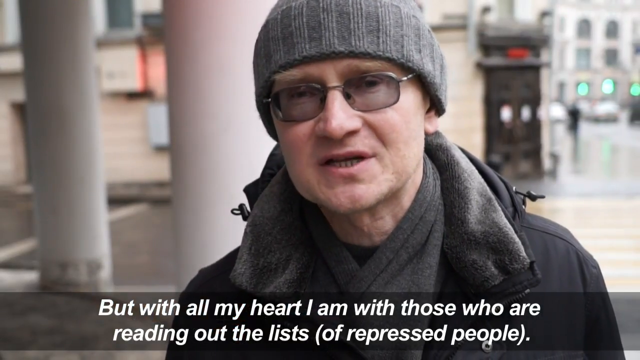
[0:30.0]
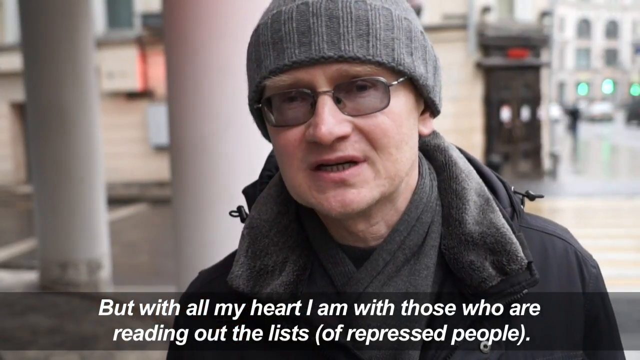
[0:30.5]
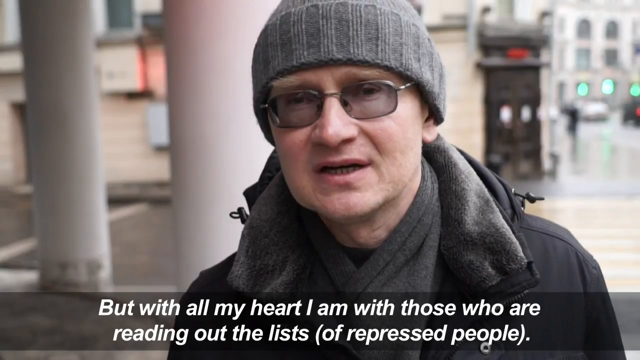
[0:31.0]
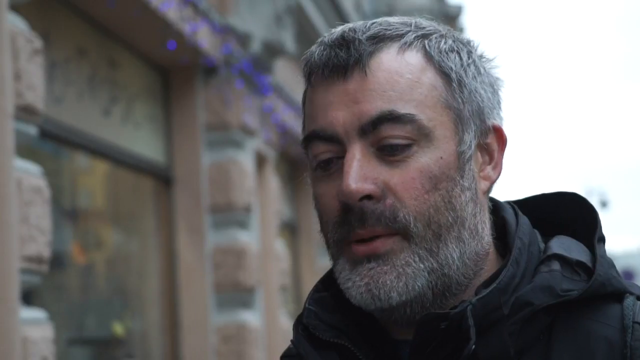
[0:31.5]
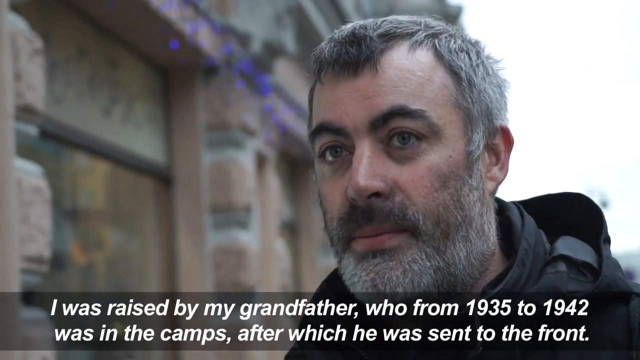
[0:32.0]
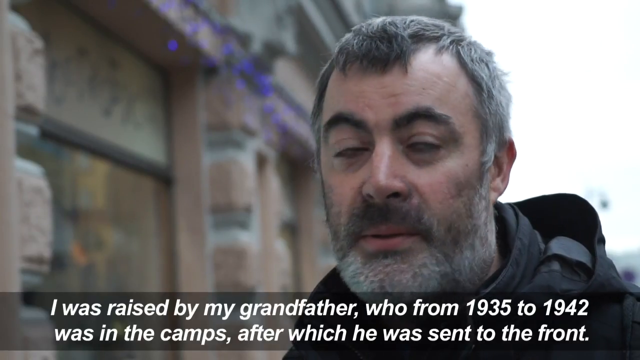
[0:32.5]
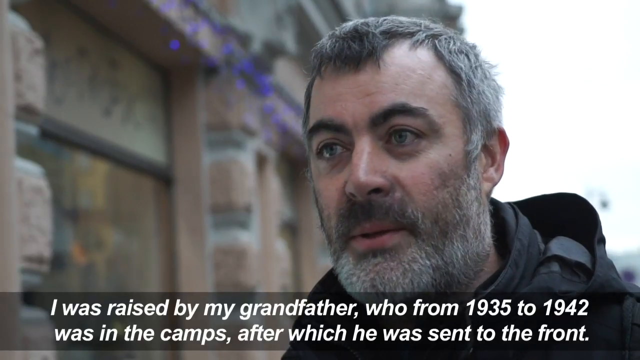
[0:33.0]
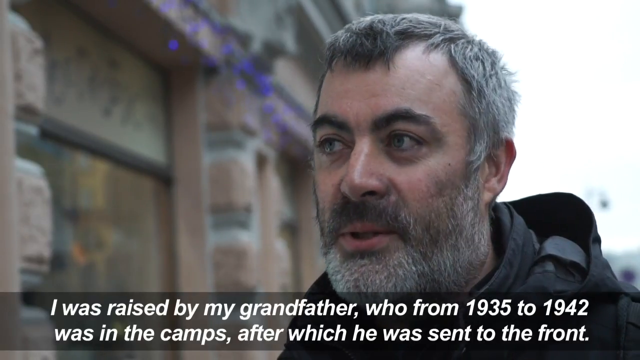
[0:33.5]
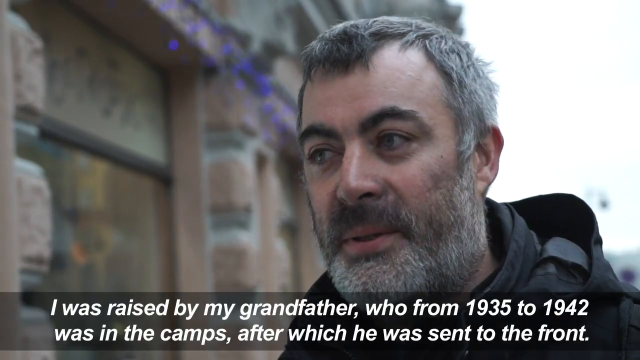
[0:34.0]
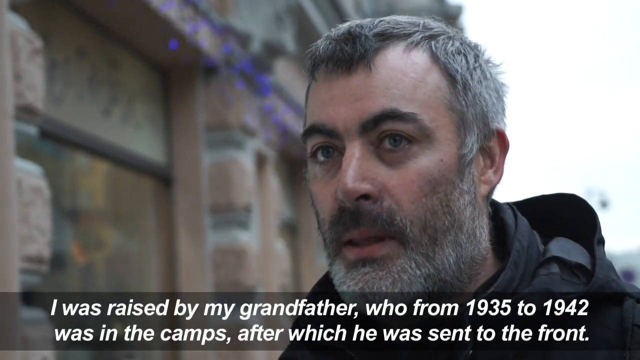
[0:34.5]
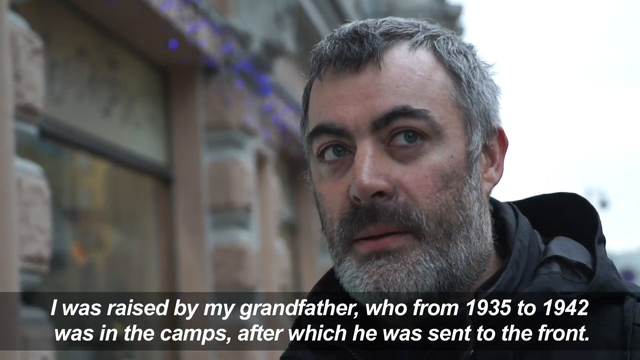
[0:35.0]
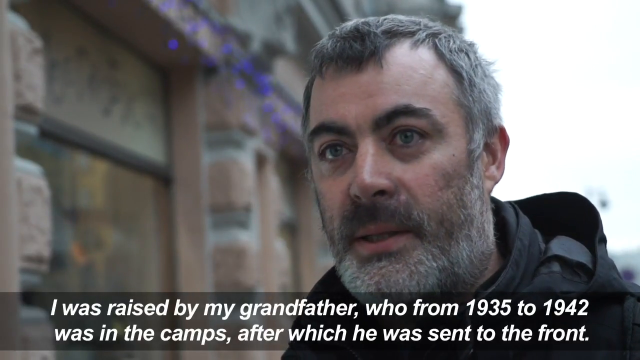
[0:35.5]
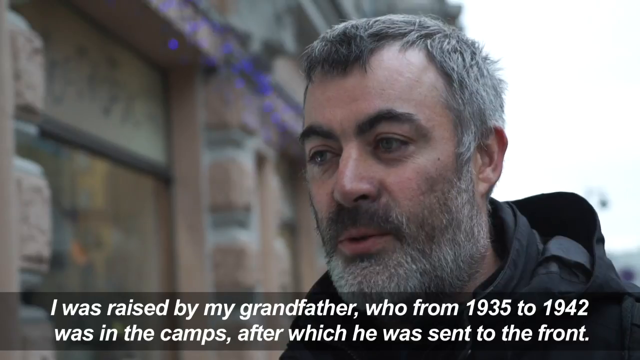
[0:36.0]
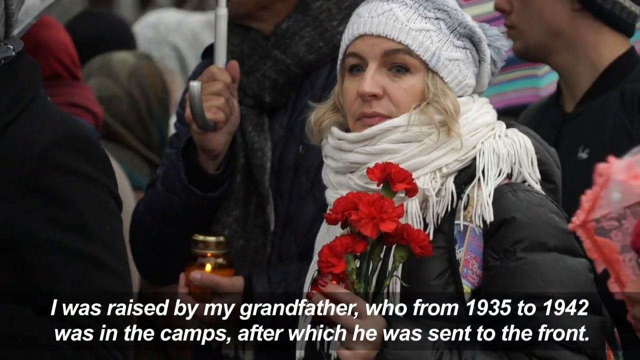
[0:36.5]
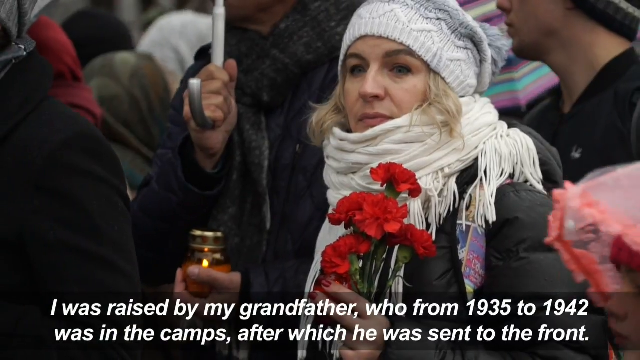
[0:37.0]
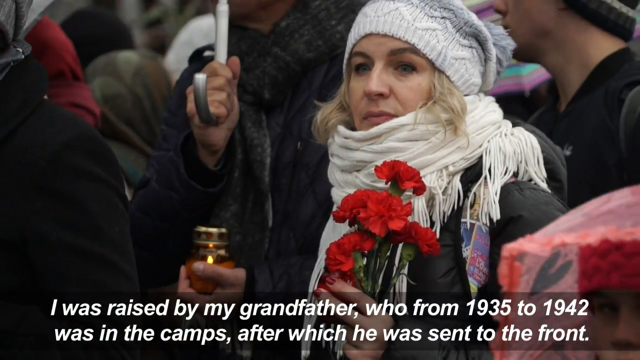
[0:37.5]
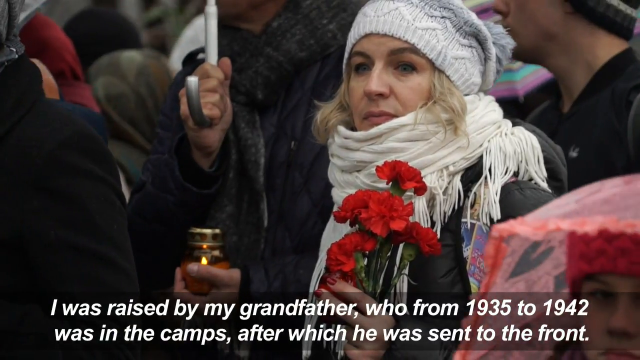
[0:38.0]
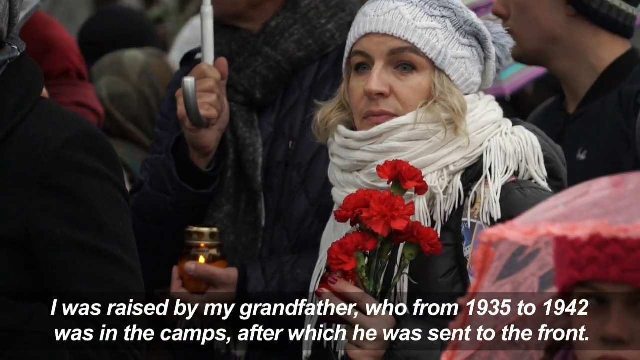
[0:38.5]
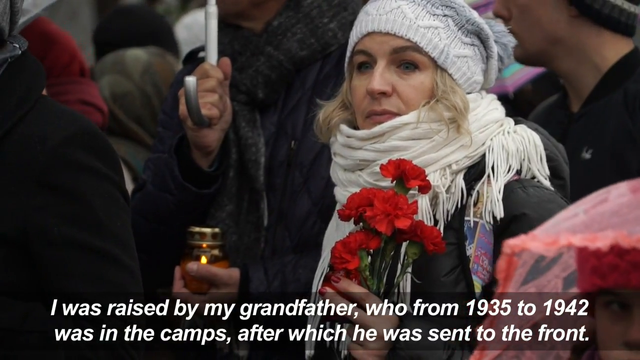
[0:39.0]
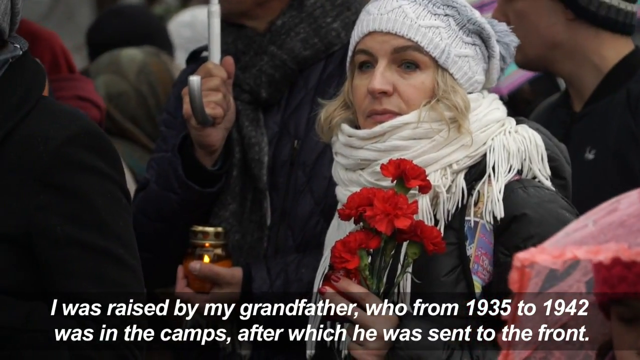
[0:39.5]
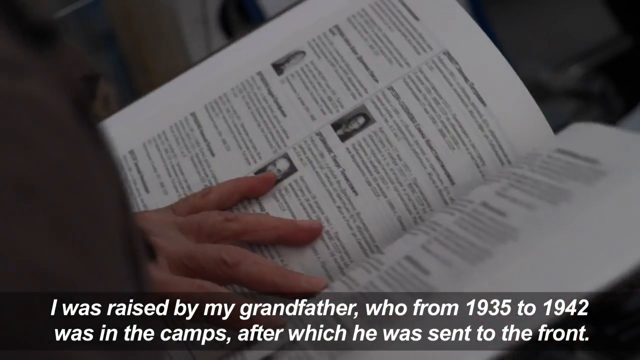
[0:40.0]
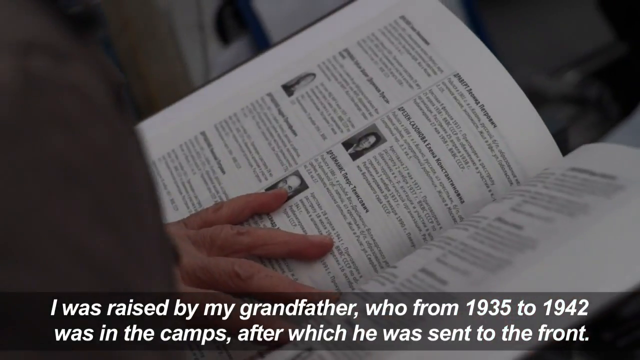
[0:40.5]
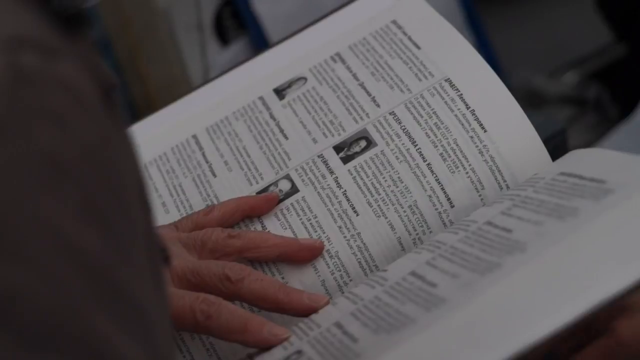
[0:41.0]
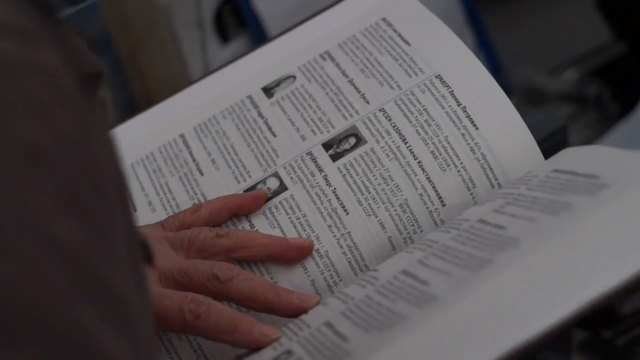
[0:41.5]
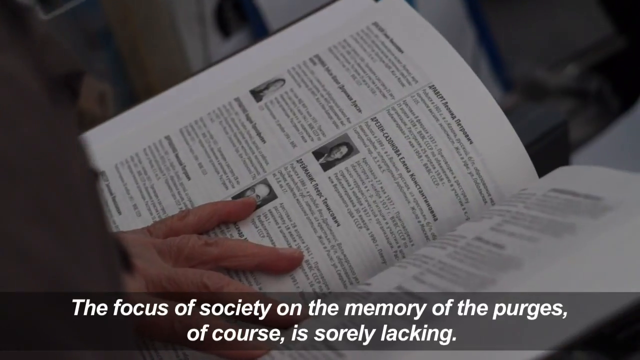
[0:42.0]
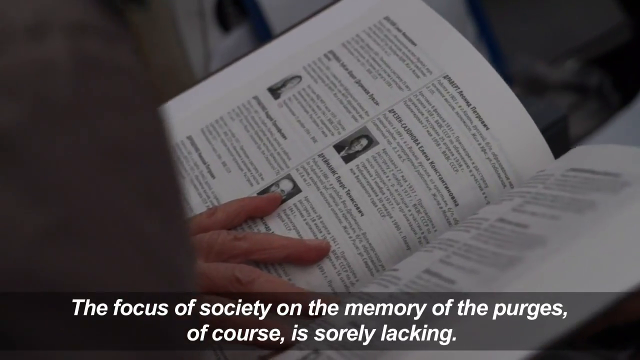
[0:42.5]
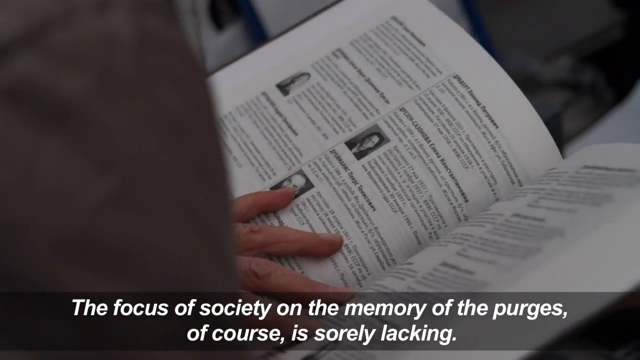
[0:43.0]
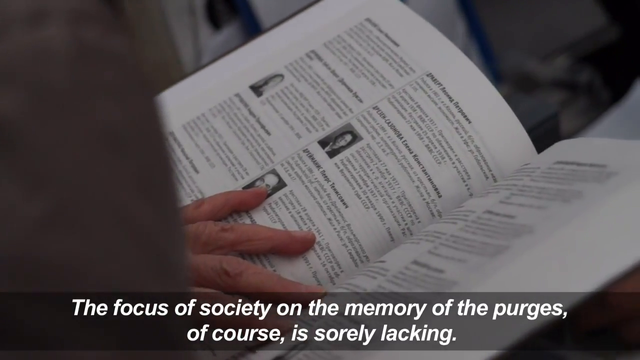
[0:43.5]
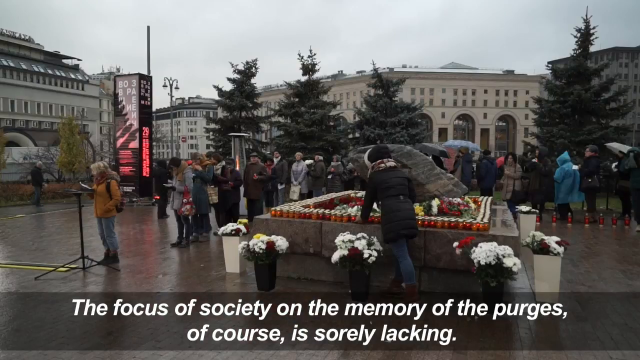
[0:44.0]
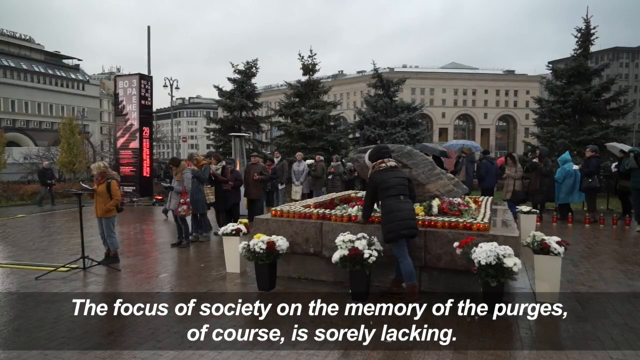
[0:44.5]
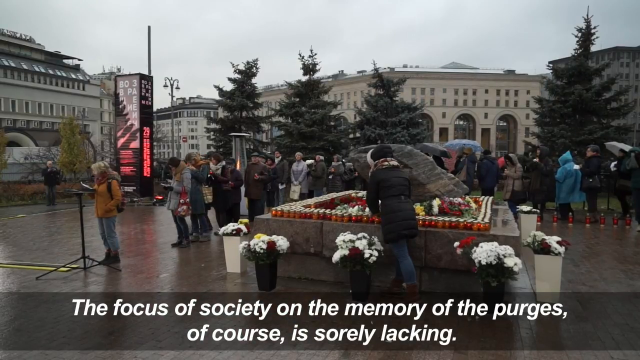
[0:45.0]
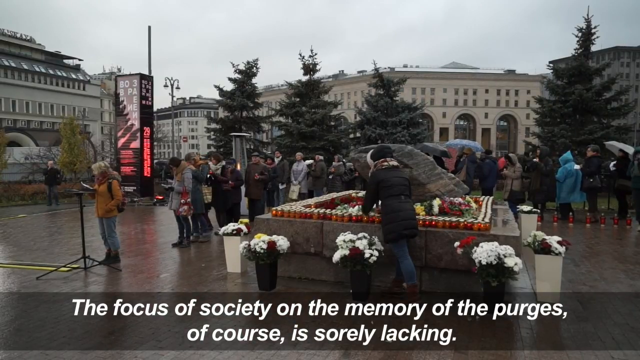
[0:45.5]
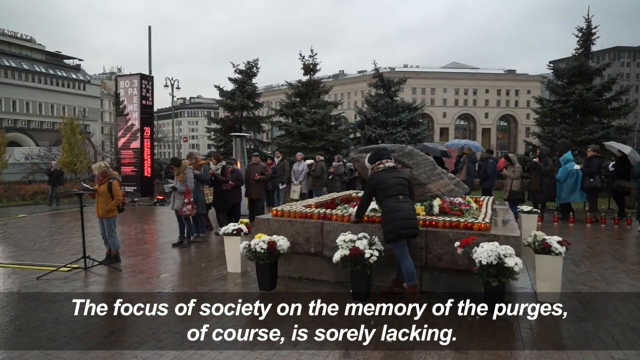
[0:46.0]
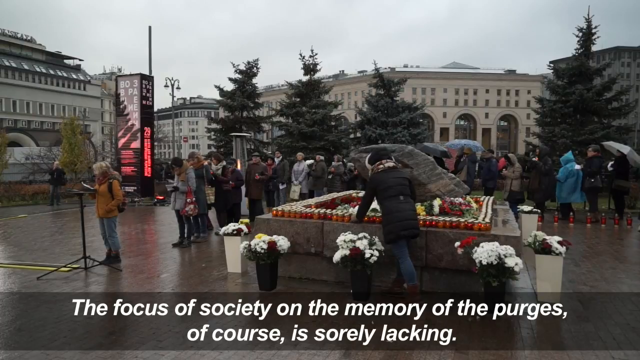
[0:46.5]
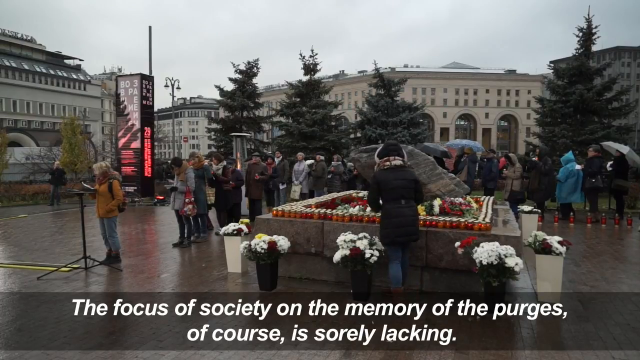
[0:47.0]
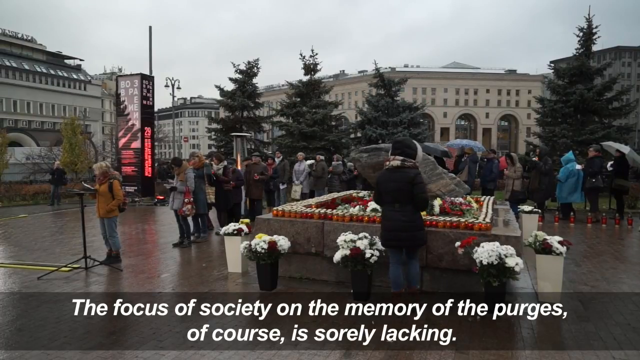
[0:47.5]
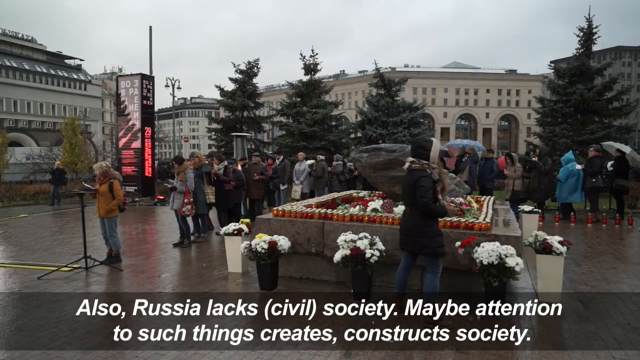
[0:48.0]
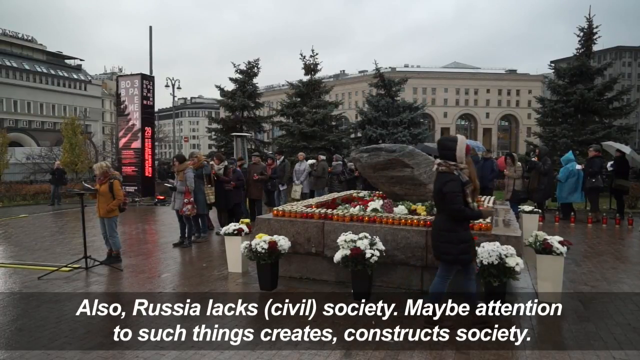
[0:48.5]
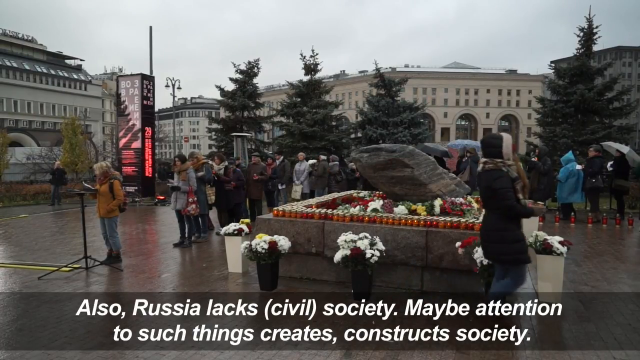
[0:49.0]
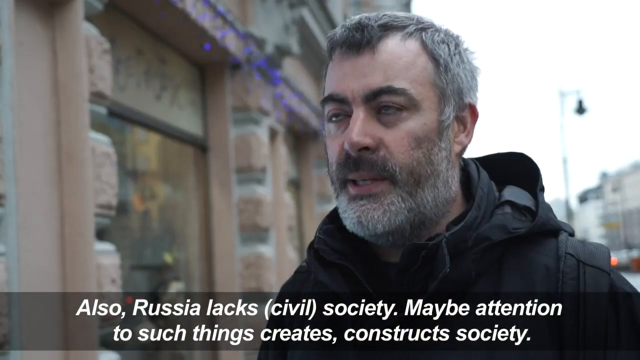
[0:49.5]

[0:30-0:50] The man continues speaking, and then the video shifts to another man, maybe in his 40s or 50s, with a graying beard and short hair that looks like it was dark brown or black but is now graying. He says, "I was raised by my grandfather, who from 1935 to 1942 was in the camps after which he was sent to the front." Meanwhile, a woman in a white scarf and a white wool hat holds flowers; she is in a crowd, but hers is the only face clearly visible. Someone next to her holds an umbrella and a candle. Next, someone holds an open book that looks like it contains pictures of people with information about them. Then an open square appears with many candles and flowers that people have set up, apparently a memorial, and someone seems to be reading names. White text reads "the focus of society on the memory of the purges, of course, is sorely lacking. Also, Russia lacks civil society. Maybe attention to such things creates, constructs, society." The video returns to the man with the graying beard.